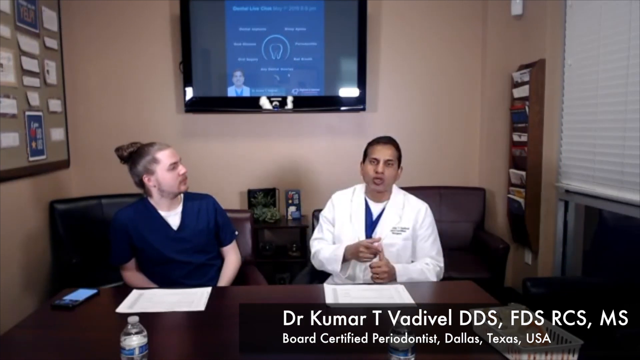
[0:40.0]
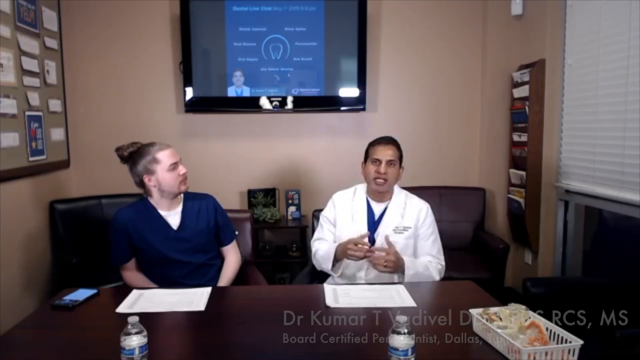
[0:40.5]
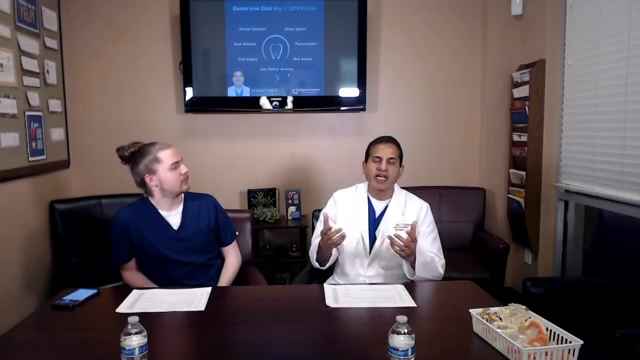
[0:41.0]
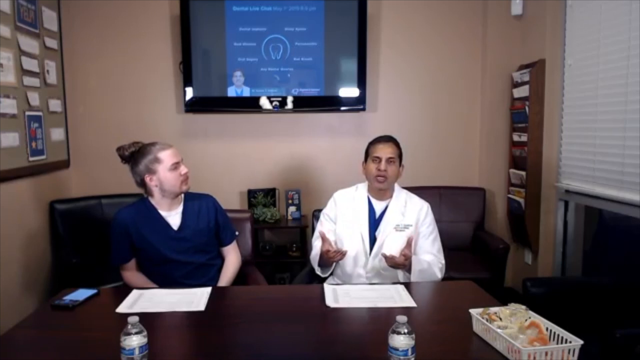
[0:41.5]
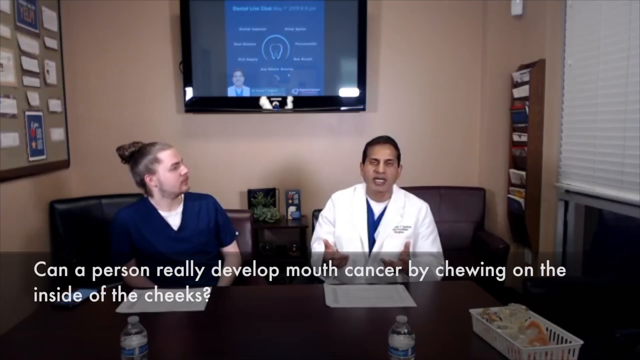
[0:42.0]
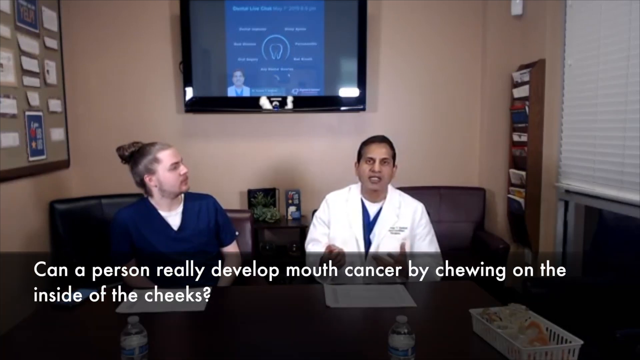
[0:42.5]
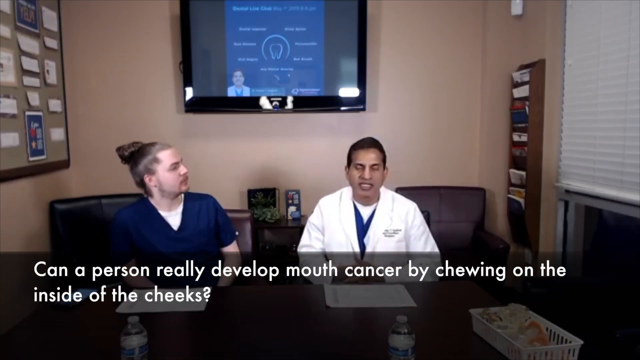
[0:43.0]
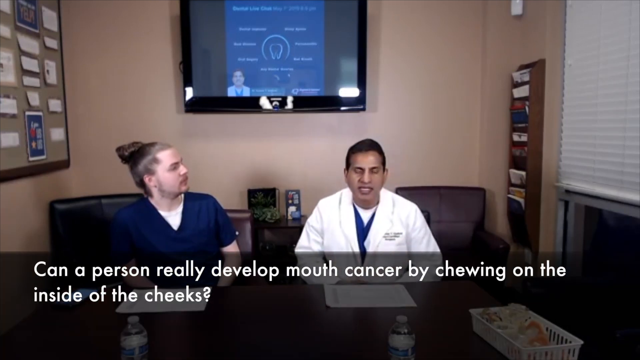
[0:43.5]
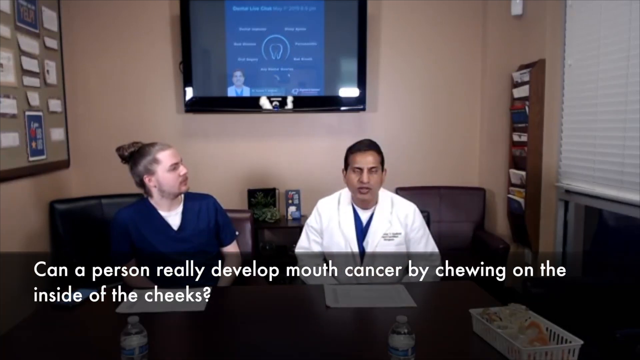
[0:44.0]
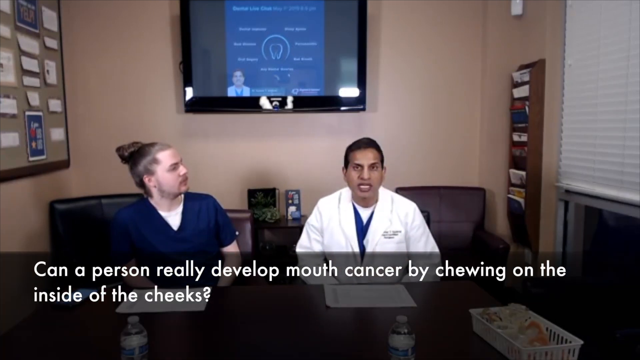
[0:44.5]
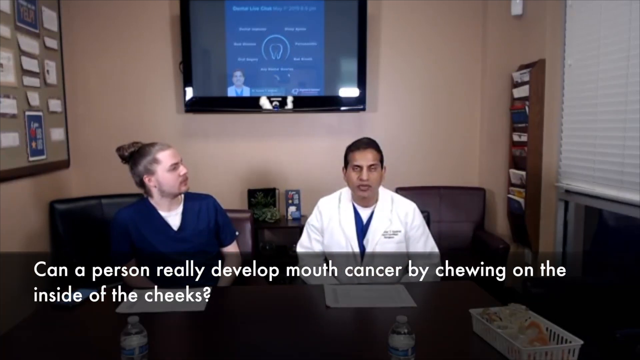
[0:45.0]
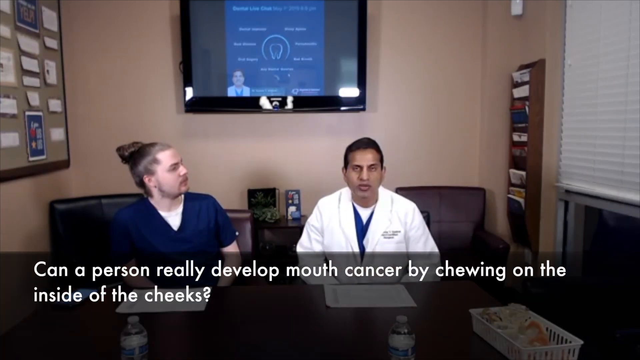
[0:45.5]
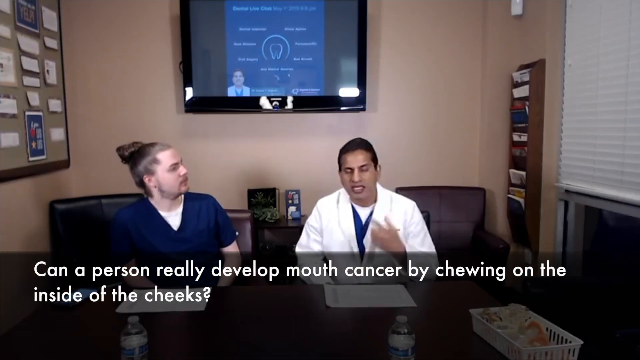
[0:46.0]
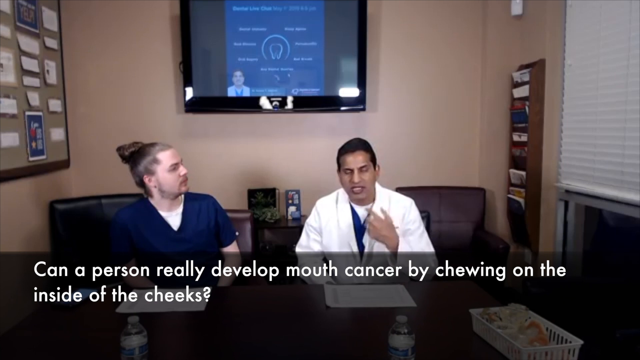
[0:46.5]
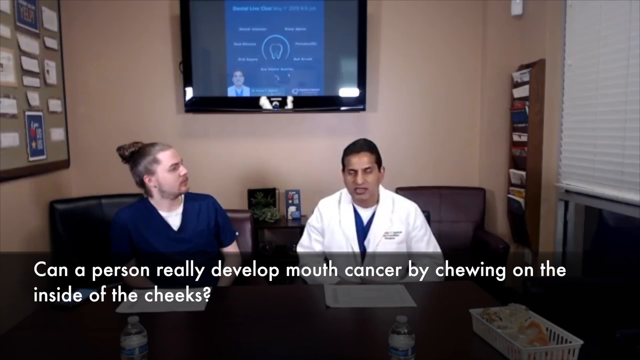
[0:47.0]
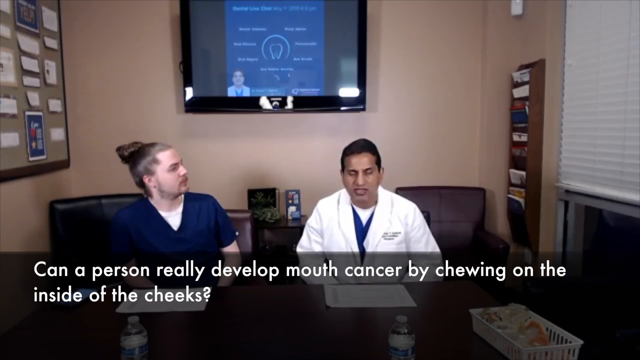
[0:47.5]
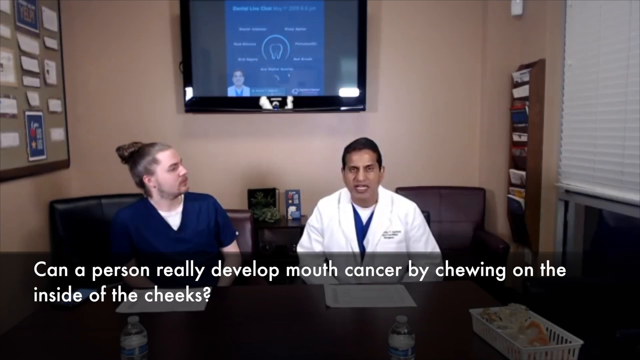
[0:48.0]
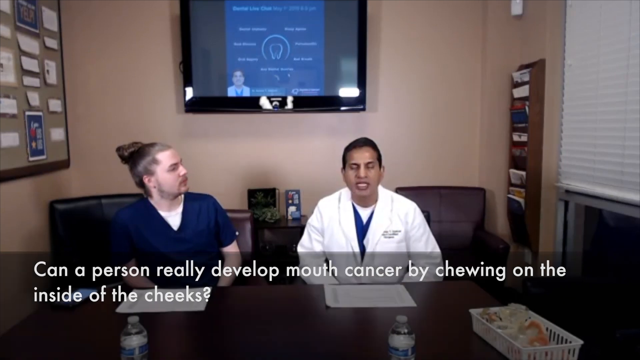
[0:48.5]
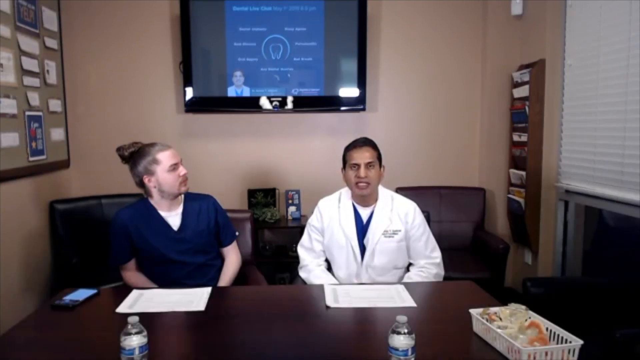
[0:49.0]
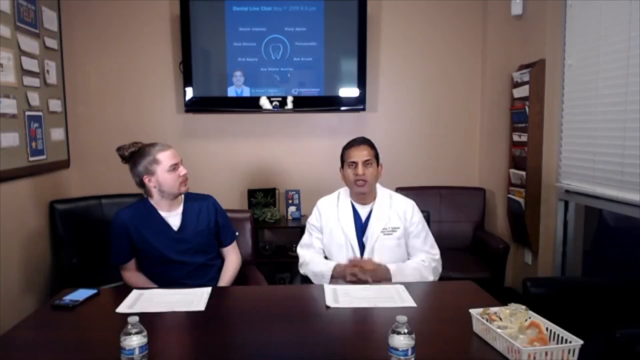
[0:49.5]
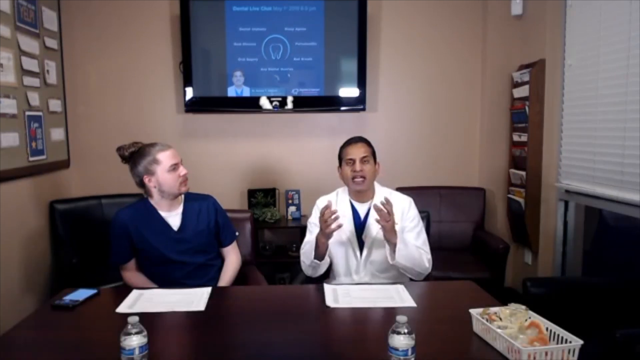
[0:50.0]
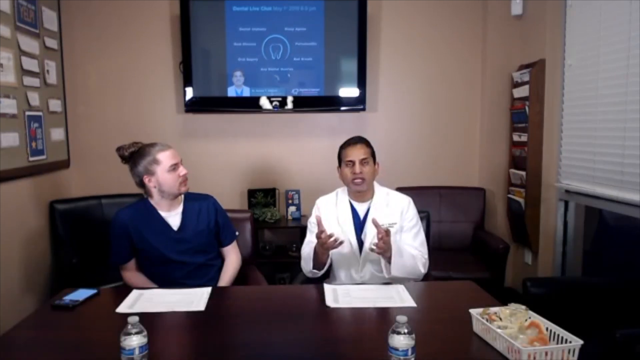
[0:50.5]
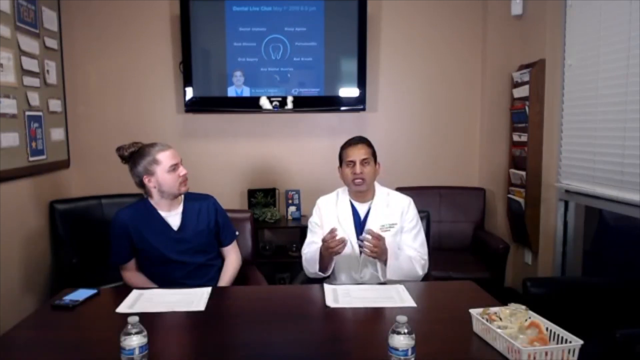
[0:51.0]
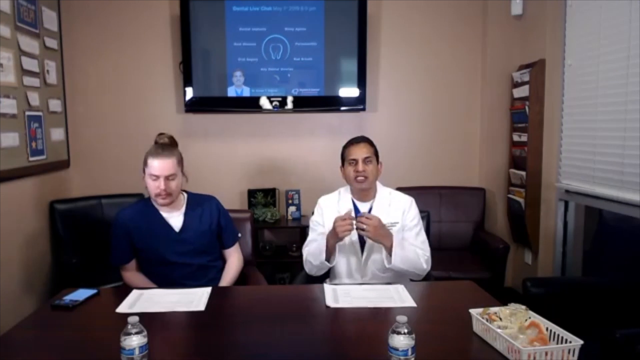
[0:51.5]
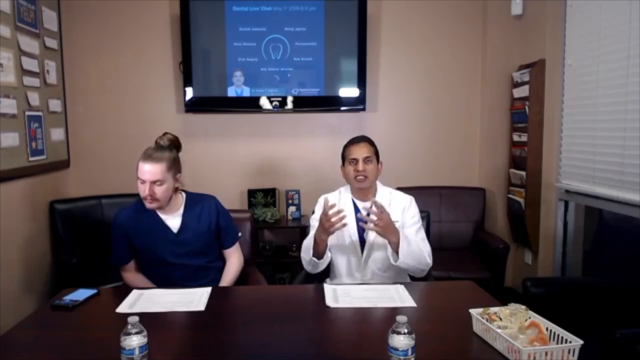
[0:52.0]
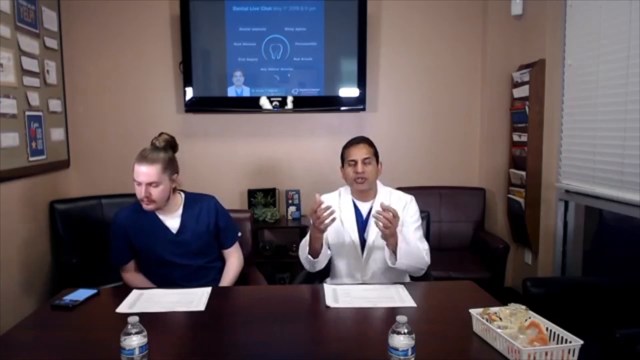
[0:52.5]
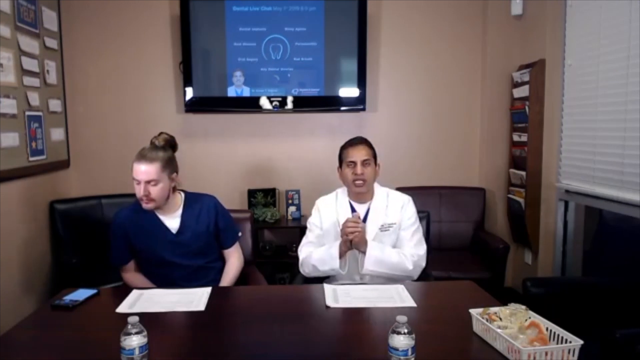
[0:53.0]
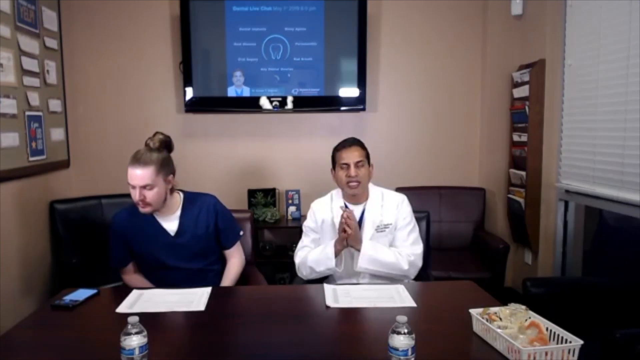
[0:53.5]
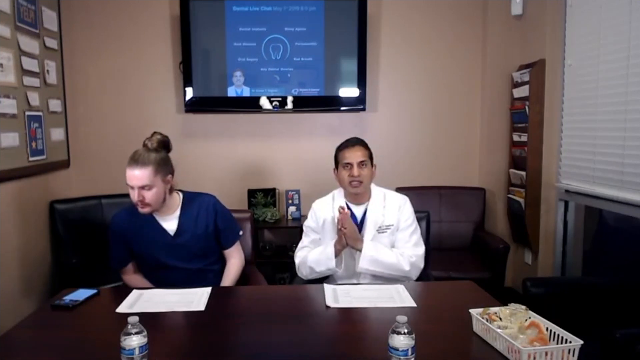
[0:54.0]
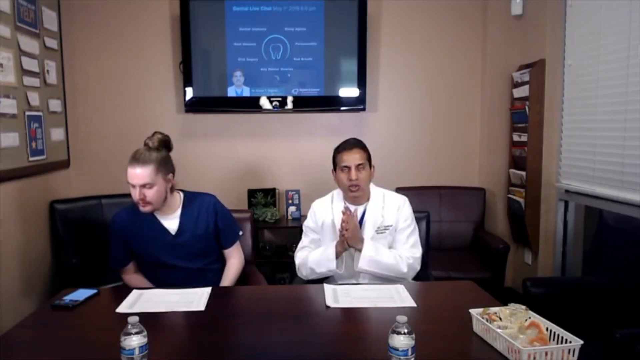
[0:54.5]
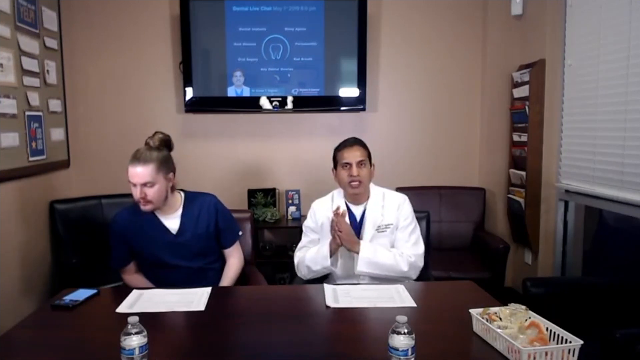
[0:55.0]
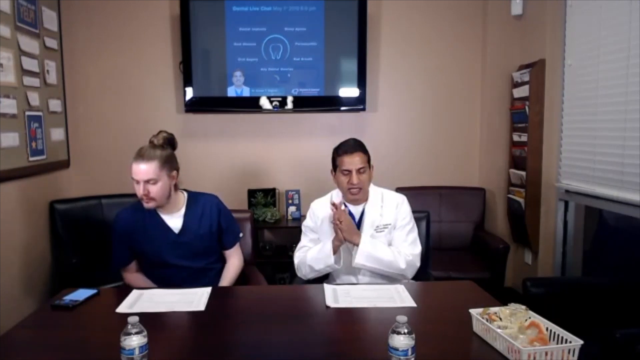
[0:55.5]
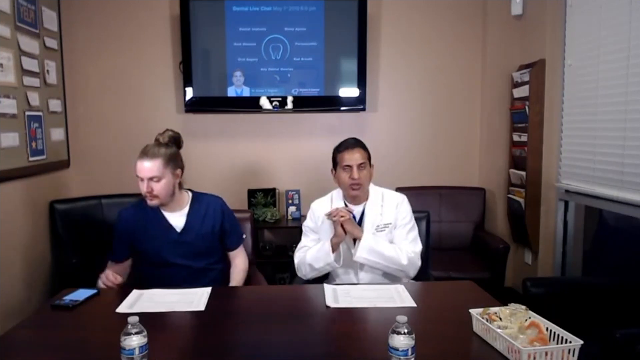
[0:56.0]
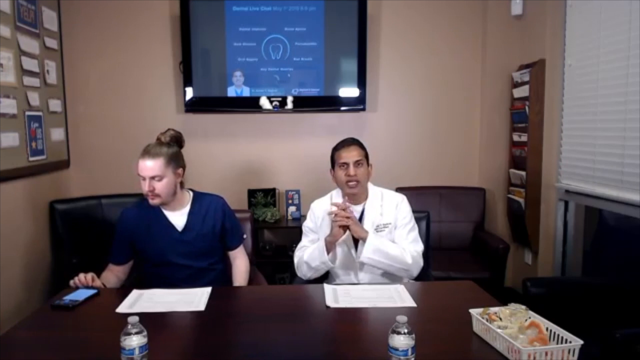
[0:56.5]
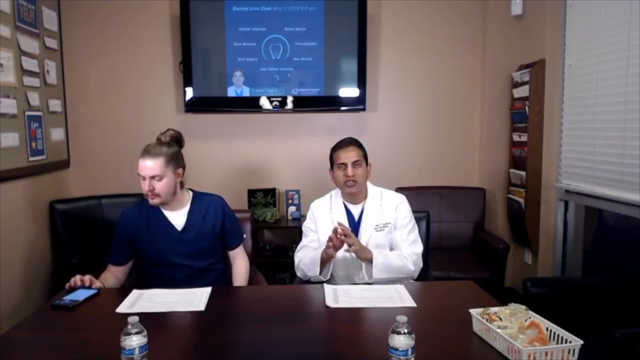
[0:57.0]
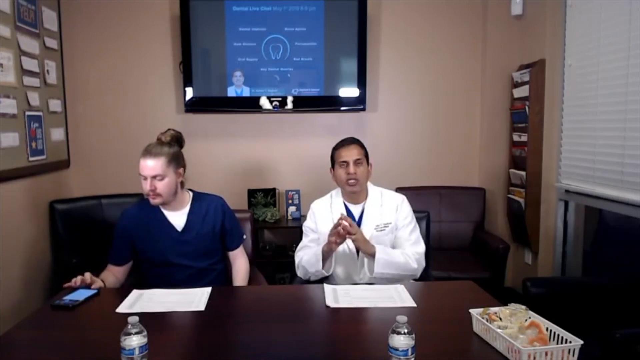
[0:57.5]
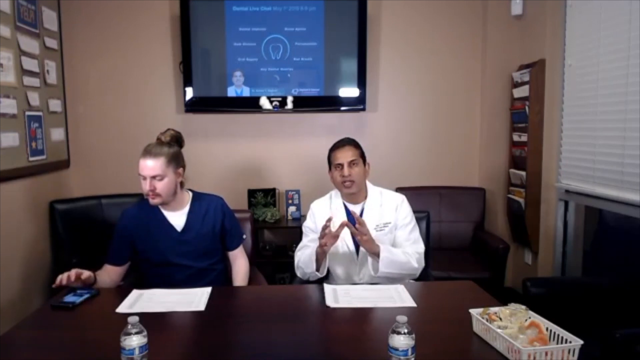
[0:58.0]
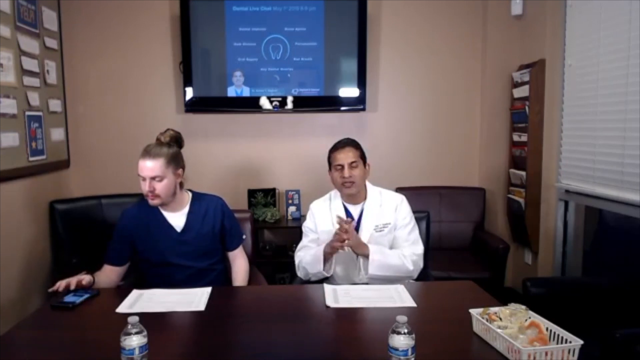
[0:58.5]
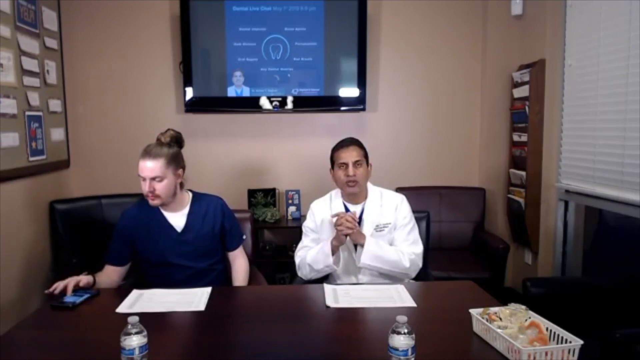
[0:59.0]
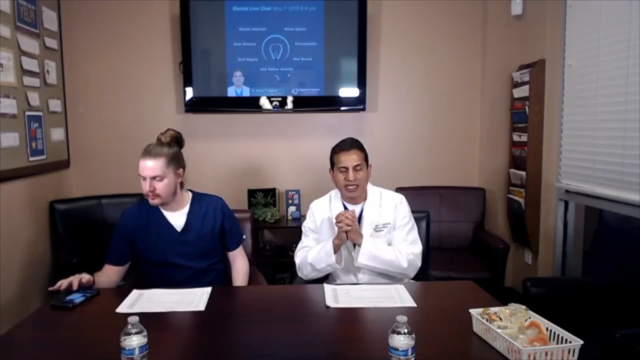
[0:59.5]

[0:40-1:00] Two men sit behind a desk in an office talking. The man on the right wears a doctor's smock and the person on the left wears a dark blue scrub top; they look like a doctor and his assistant. The assistant looks at the doctor as the doctor talks. The question on the screen reads "can a person really develop mouth cancer by chewing on the inside of the cheeks?" The doctor occasionally raises his hands, at one point pointing to the side of his mouth, and then outstretches his fingers, puts his hands together and clasps his fingers as he gestures to accentuate his words. On the wall behind them, a TV screen is on, showing a blue banner with some information in the middle and what looks like an image of the doctor in its lower left corner. On the right wall there appears to be mounted shelving holding pamphlets and other information, and on the left wall information is stuck to a poster board.